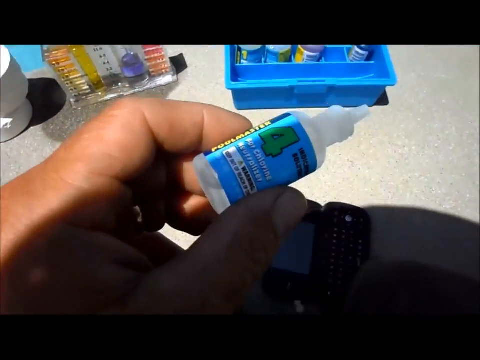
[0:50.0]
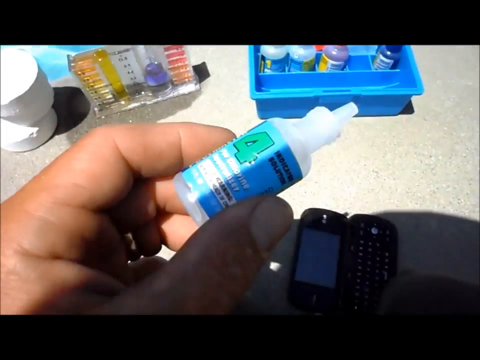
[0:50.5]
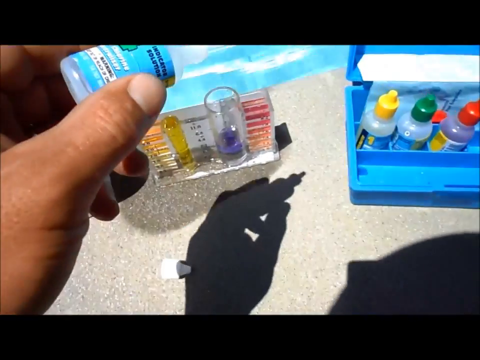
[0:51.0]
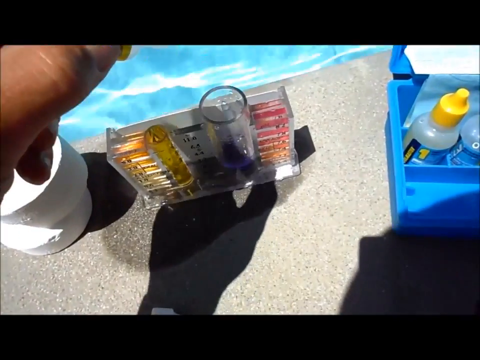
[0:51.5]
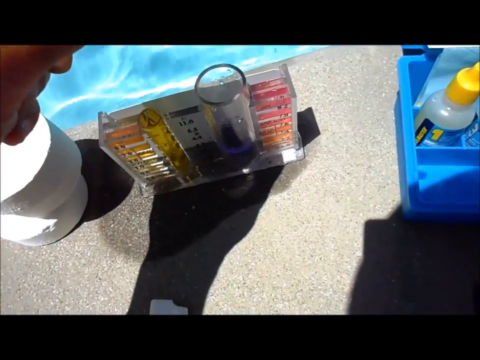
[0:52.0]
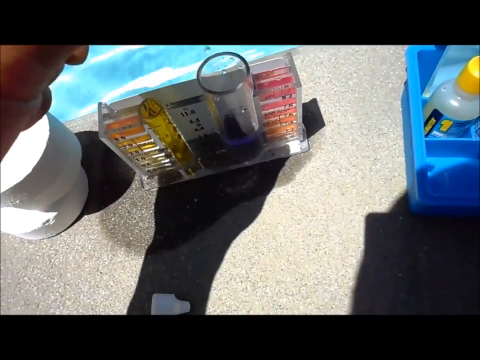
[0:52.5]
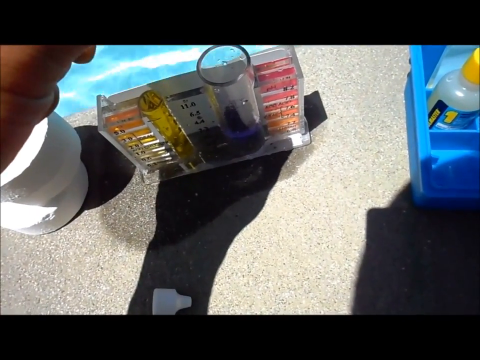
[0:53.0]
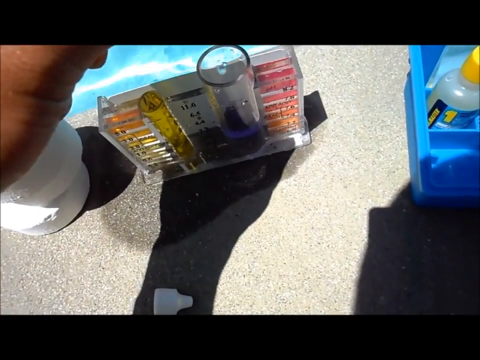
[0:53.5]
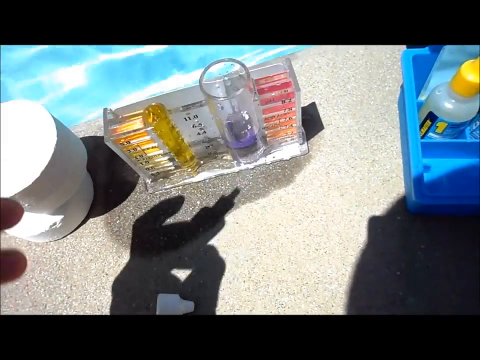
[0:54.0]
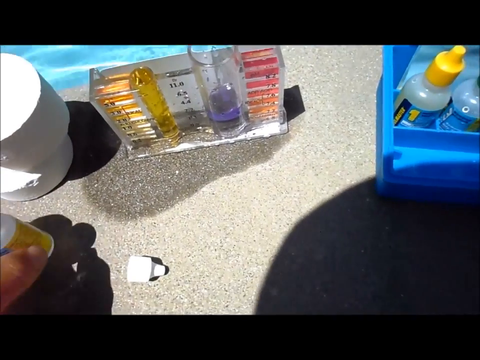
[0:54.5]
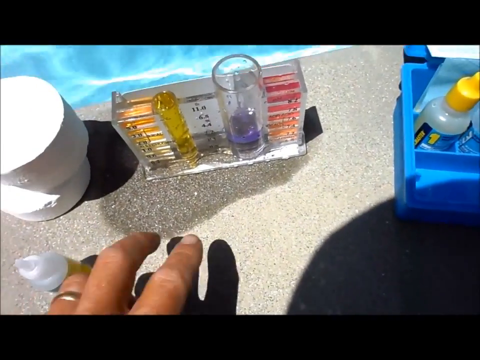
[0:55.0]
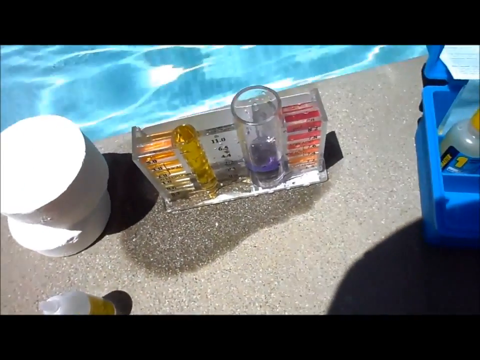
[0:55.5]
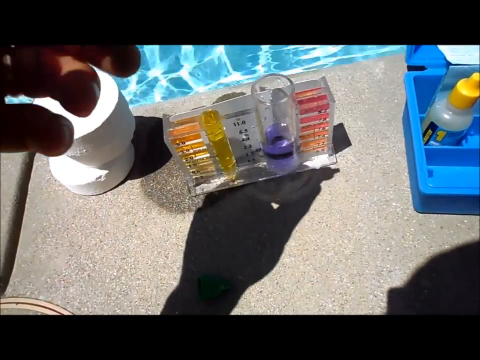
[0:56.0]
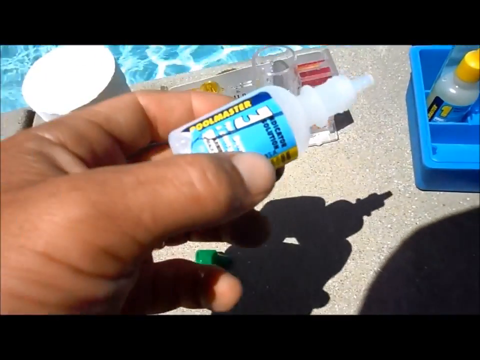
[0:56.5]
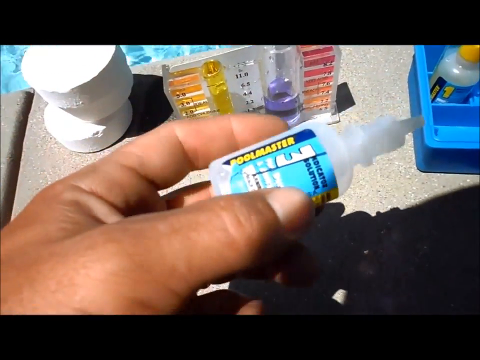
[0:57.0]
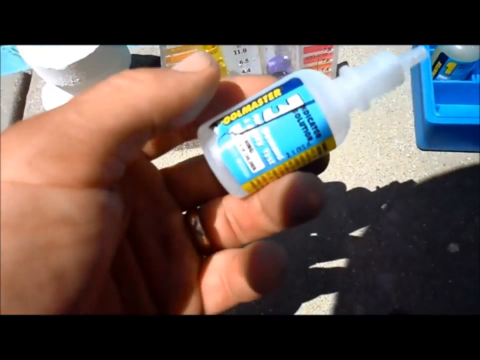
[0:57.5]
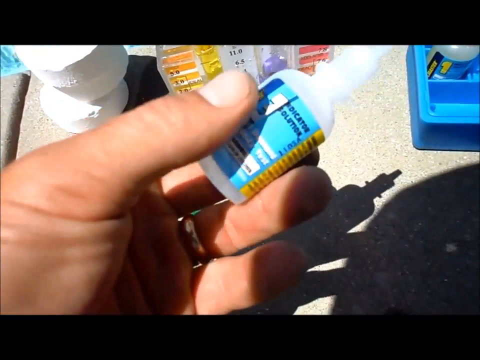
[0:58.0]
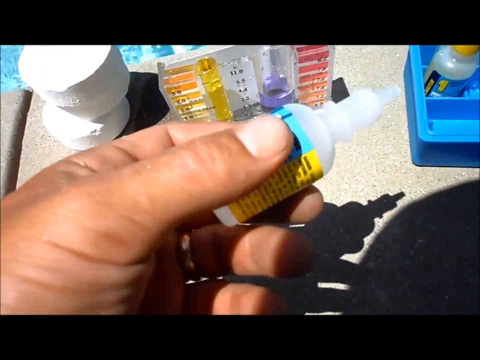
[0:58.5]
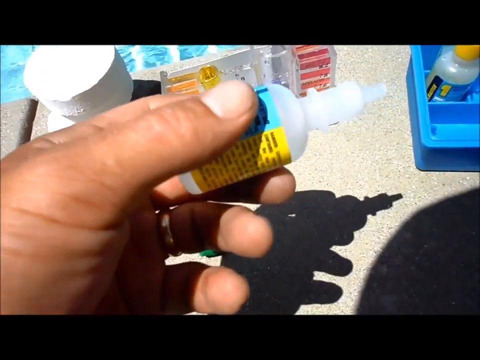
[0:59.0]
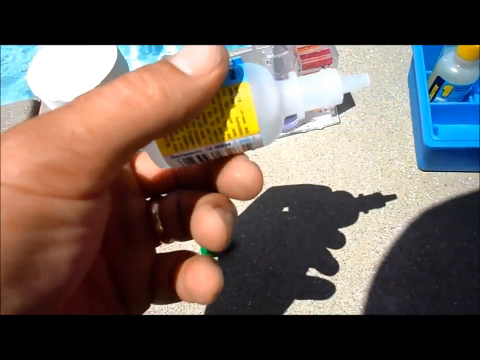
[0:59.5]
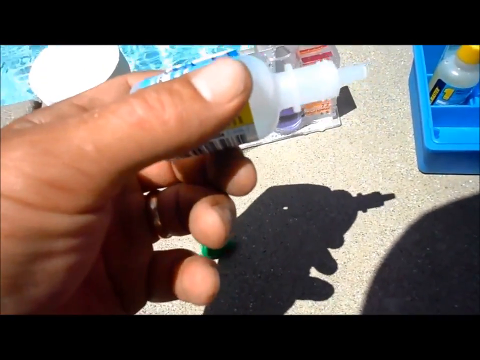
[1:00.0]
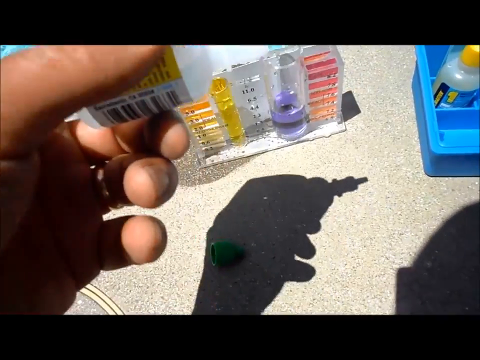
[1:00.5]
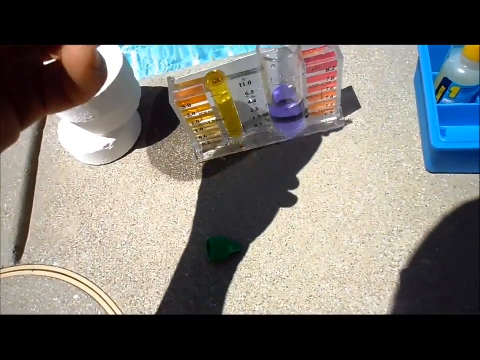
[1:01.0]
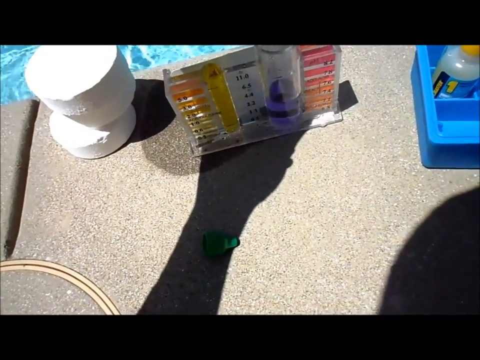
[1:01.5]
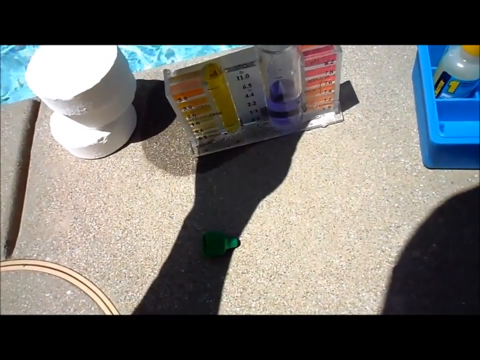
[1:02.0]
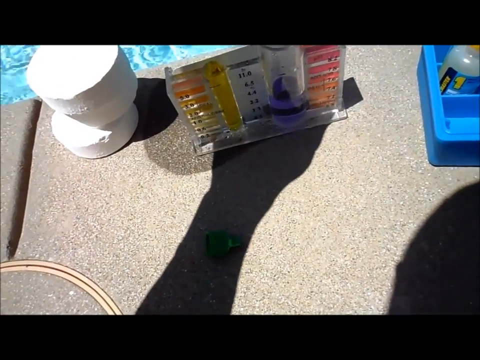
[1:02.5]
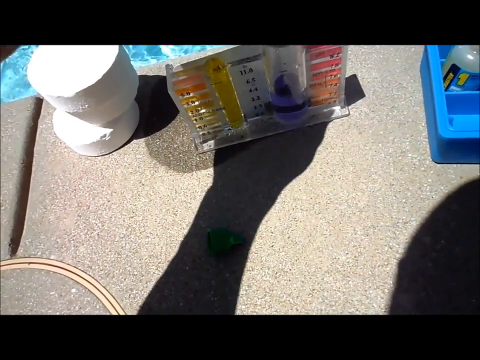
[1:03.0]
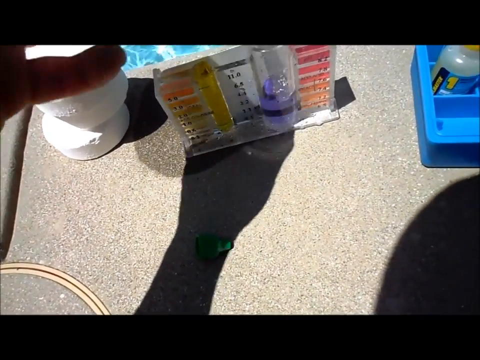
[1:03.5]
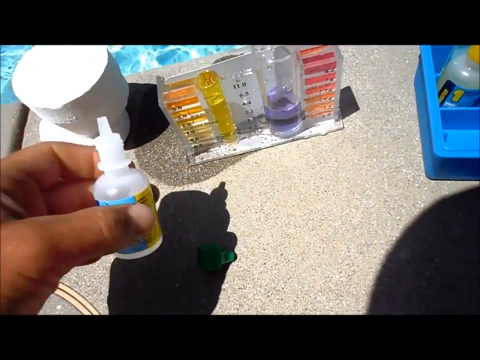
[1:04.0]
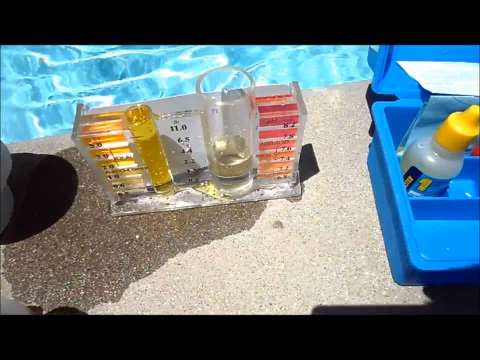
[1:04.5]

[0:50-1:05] The man's hand is very close to the camera, clearly showing the chemical marked number four. He shows it to the viewer, then takes it over to what looks like a test tube in the chemical reader, puts a couple of drops in, and quickly puts the lid back on. The liquid in the tube looks purplish. The video then cuts to the man holding a different bottle, less easily readable, with the number three visible on it. His shadow is much clearer here, including a little of his head, his hand and his arm. After showing the bottle, he puts a little of it into the tube as well. A ring is visible on his hand.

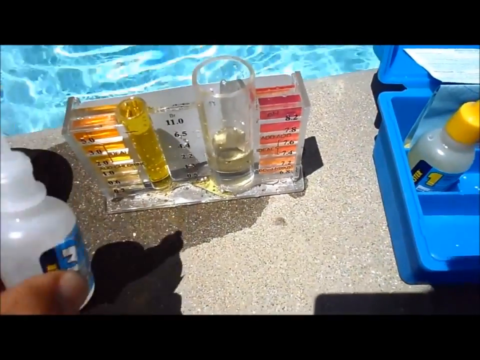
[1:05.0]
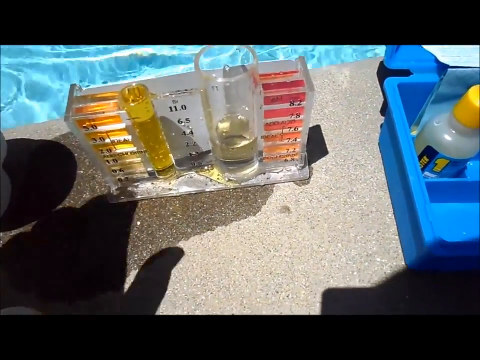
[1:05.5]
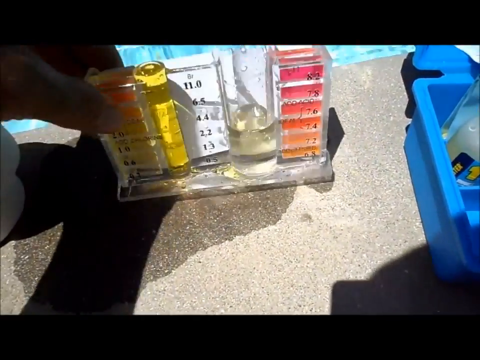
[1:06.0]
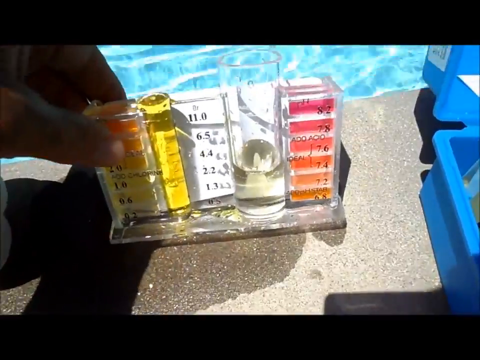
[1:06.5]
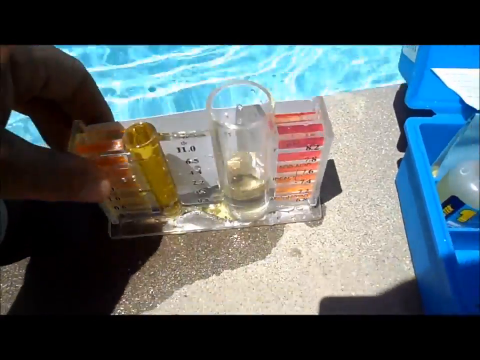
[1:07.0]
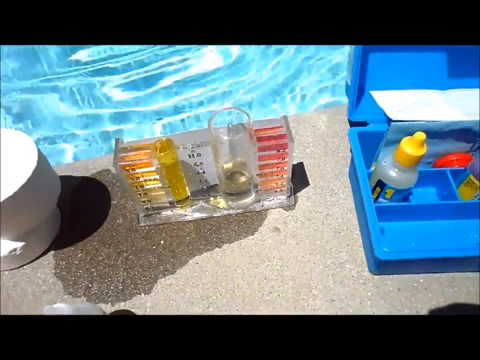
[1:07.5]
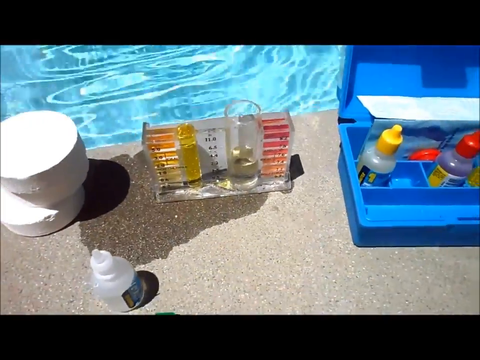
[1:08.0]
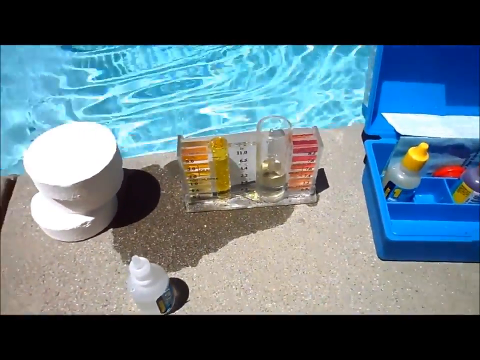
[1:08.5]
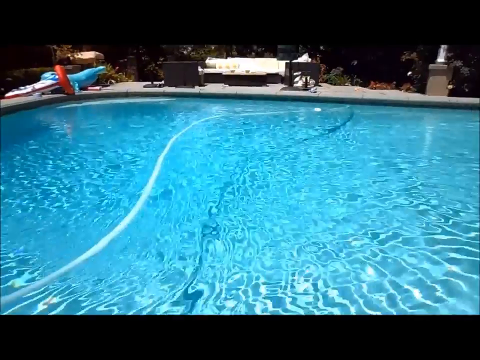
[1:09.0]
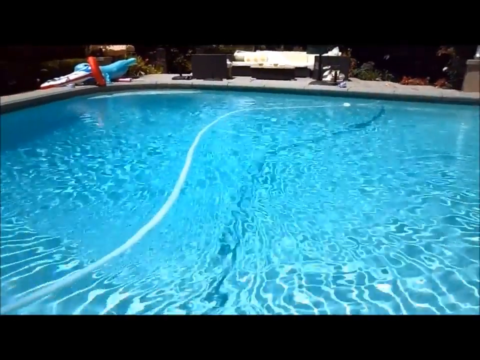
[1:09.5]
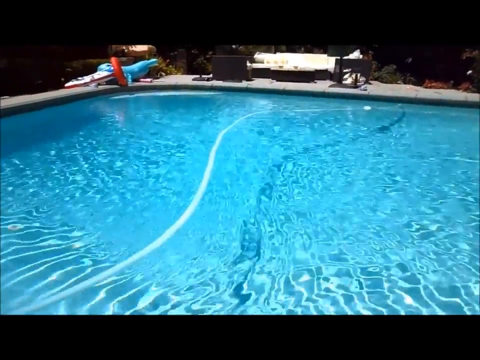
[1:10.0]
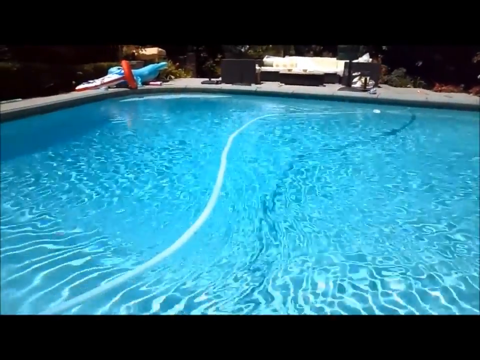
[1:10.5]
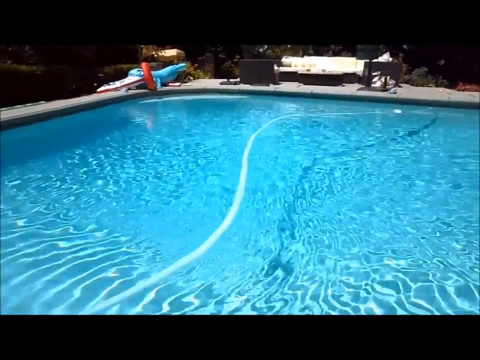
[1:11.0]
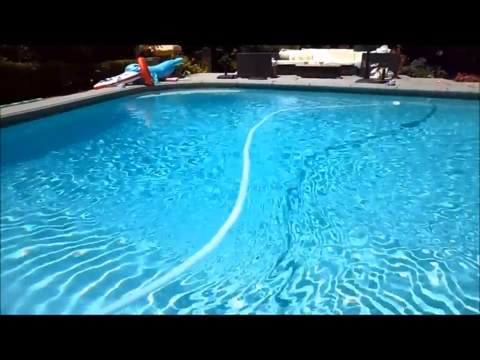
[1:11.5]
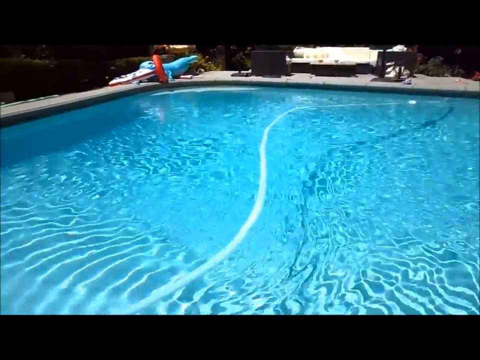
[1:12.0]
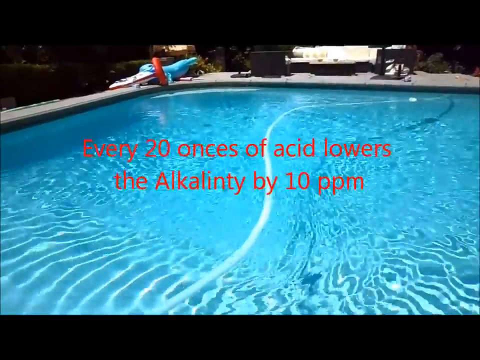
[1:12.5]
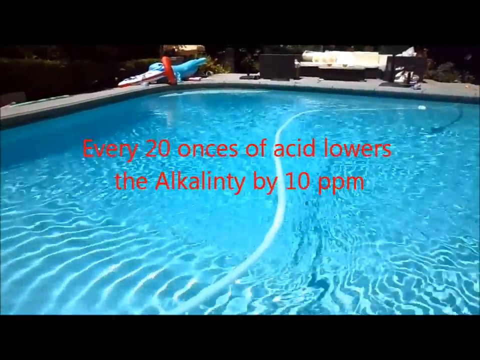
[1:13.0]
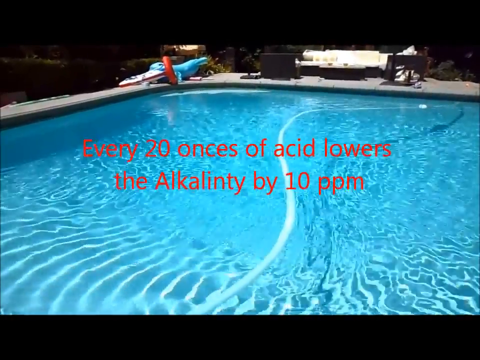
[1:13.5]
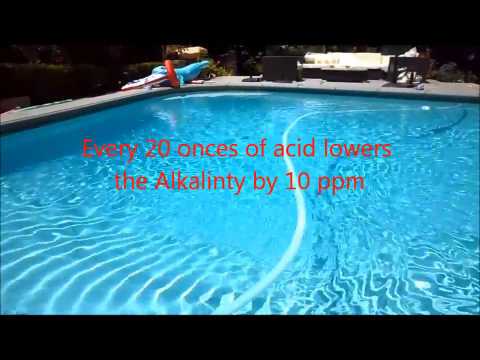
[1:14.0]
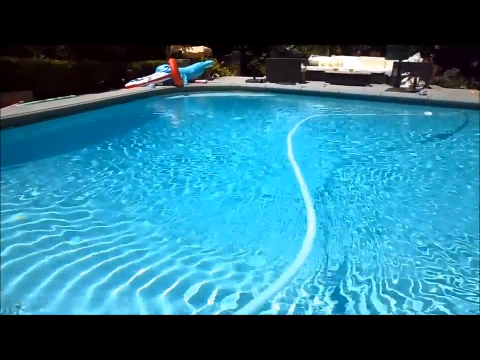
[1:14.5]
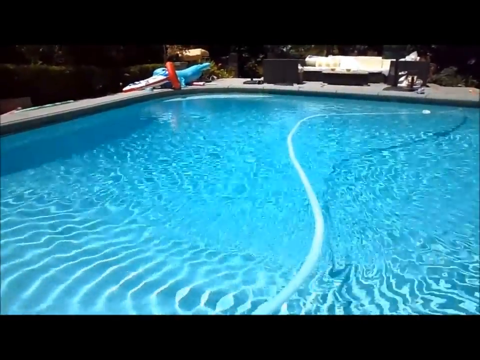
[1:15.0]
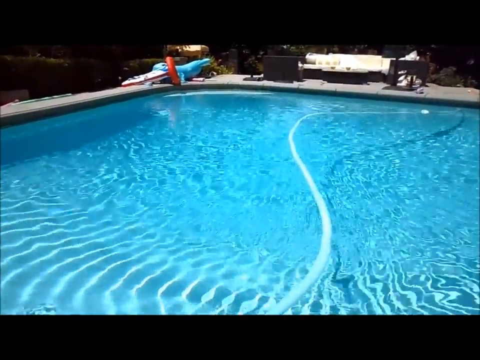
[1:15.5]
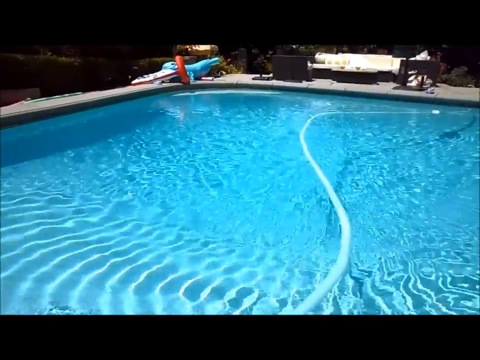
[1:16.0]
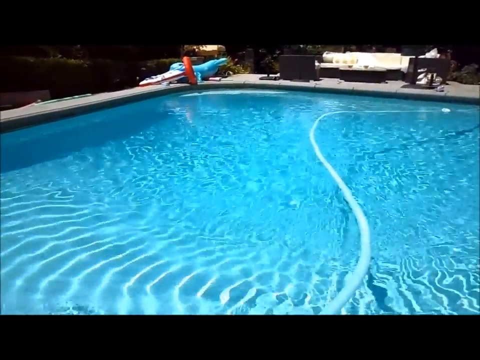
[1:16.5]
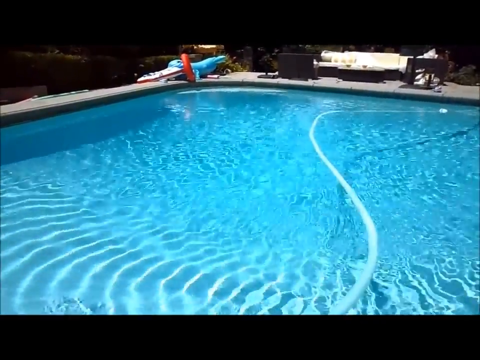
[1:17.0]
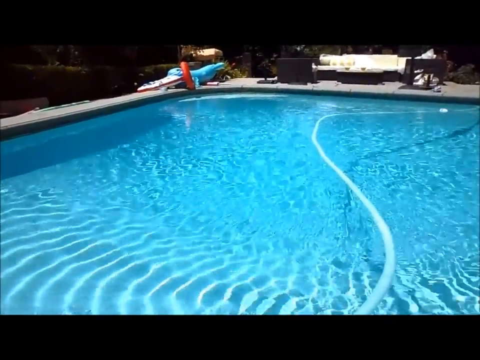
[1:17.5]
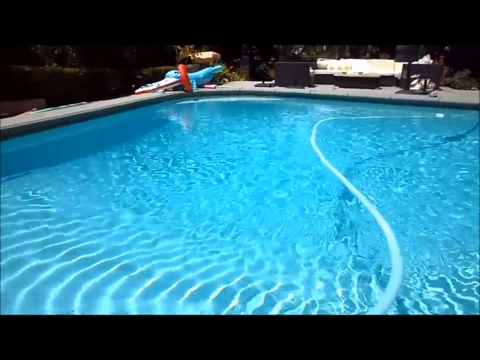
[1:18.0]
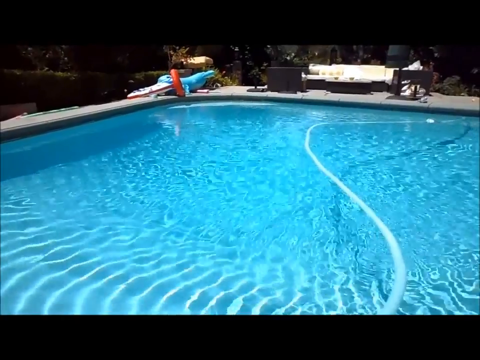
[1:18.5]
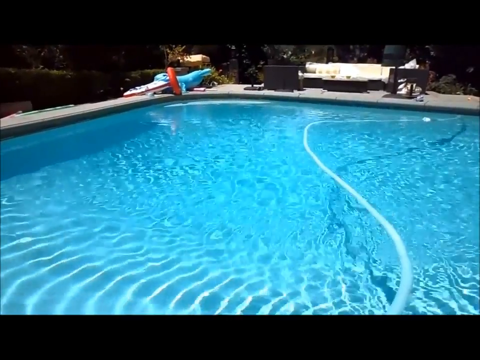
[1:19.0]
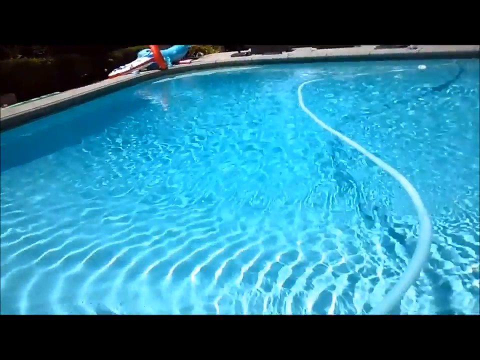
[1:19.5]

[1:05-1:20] For the first few seconds the test tube and the man's chemicals are shown as he tilts the tube back slightly; one of the bottles has been set in front of the tester. The video then cuts to a shot of the entire swimming pool with a hose in it and the water moving a little; it looks like a very sunny day. Text over the pool states that every 20 ounces of acid lowers the acidity of the pool by a certain point. More of the pool follows, with what looks like a pool floatie, a little blue inflatable shark or dolphin kid's toy, and what look like bushes in the background. The shot ends with a very quick view of the man holding another piece of pool equipment in his hand.